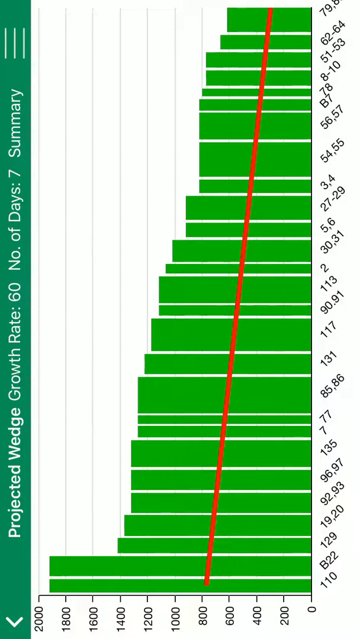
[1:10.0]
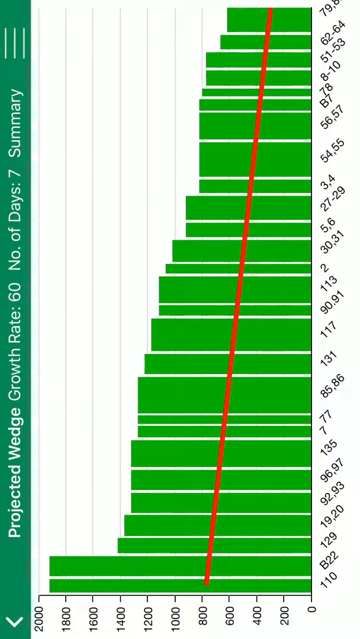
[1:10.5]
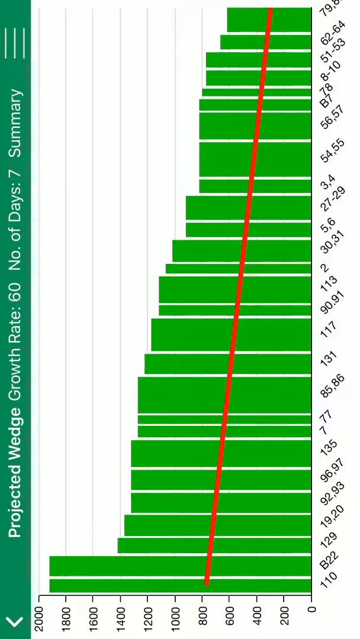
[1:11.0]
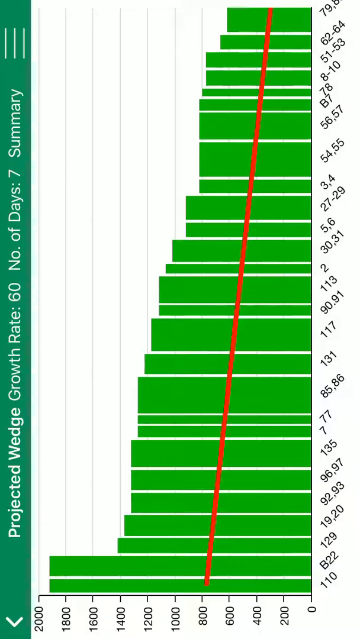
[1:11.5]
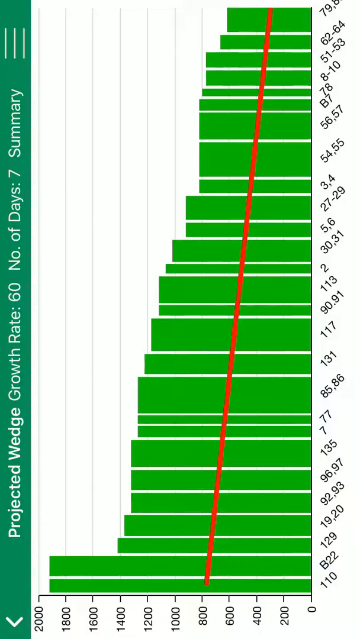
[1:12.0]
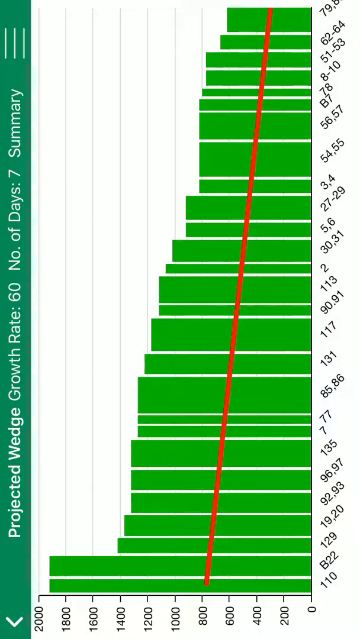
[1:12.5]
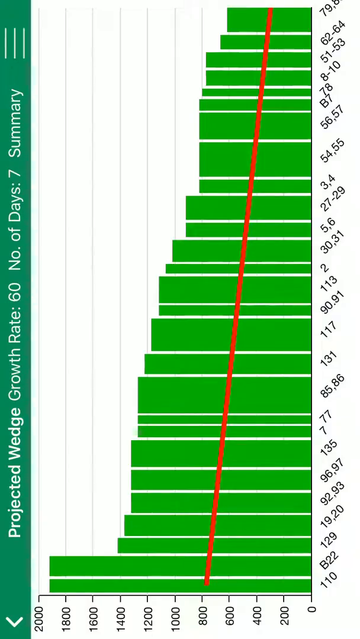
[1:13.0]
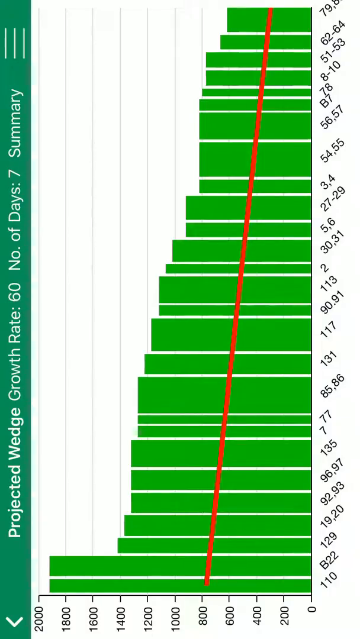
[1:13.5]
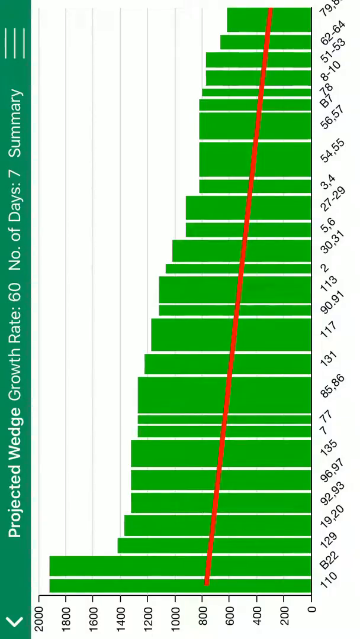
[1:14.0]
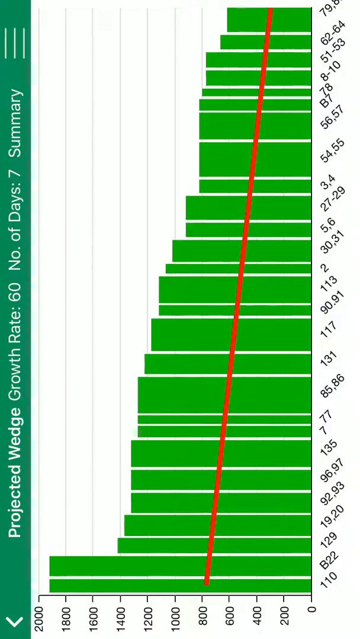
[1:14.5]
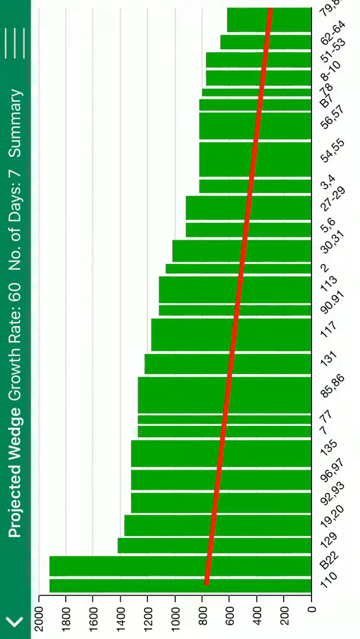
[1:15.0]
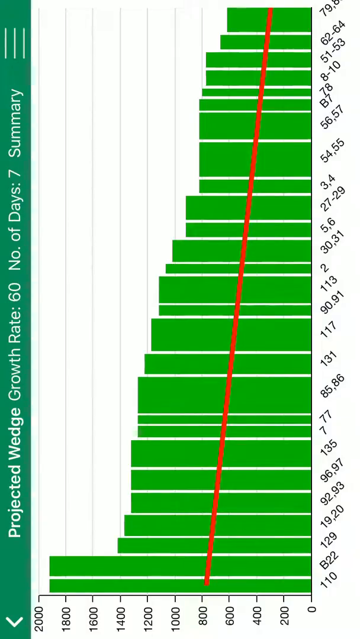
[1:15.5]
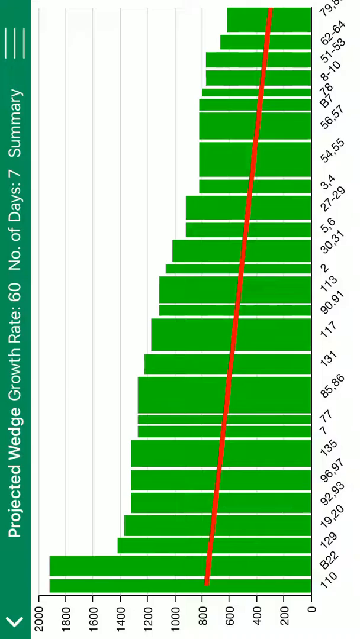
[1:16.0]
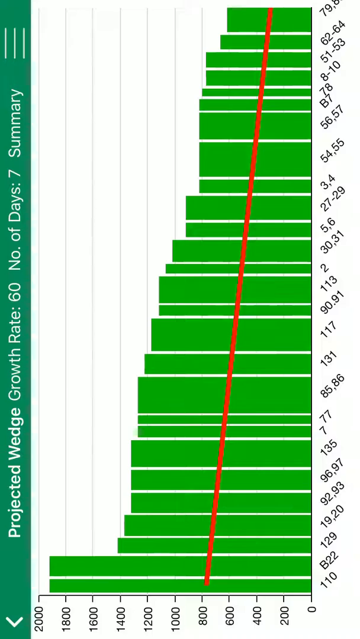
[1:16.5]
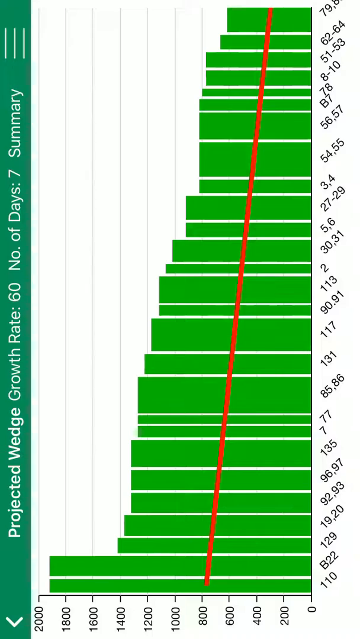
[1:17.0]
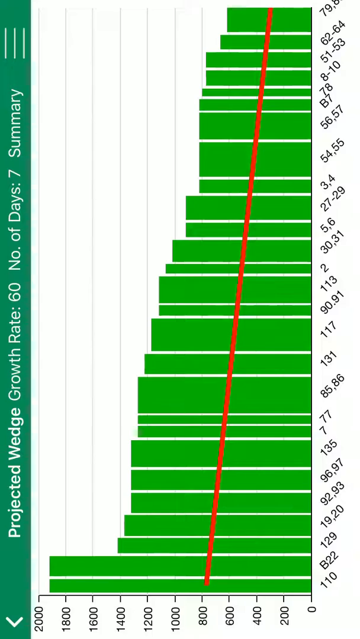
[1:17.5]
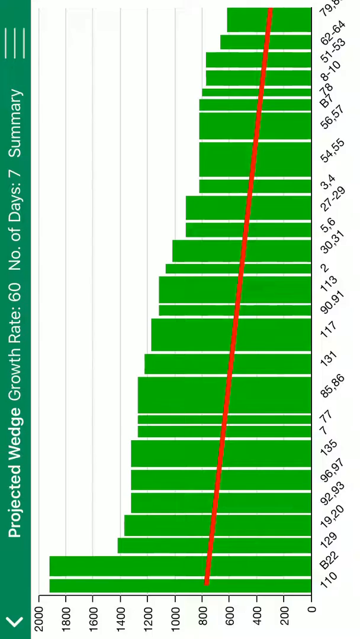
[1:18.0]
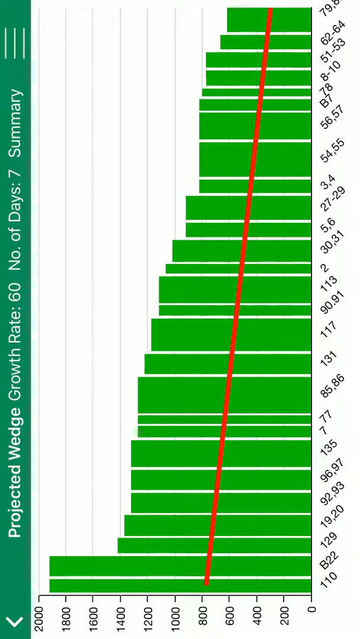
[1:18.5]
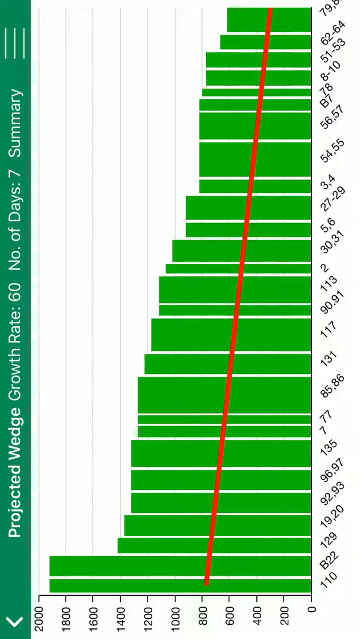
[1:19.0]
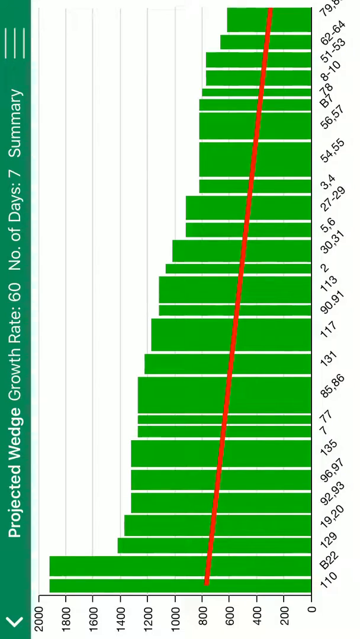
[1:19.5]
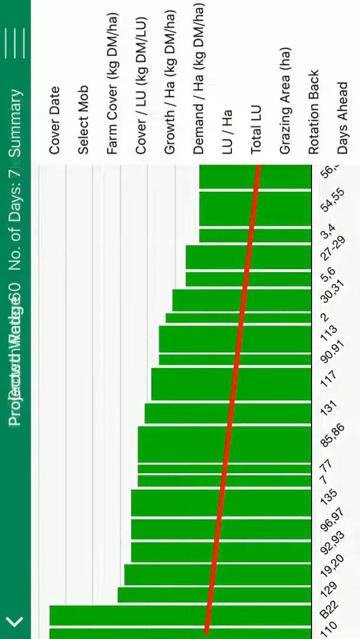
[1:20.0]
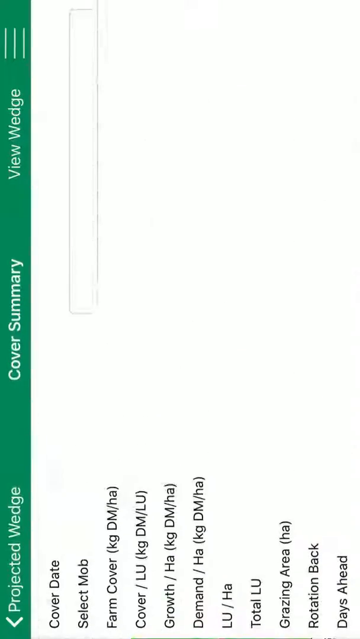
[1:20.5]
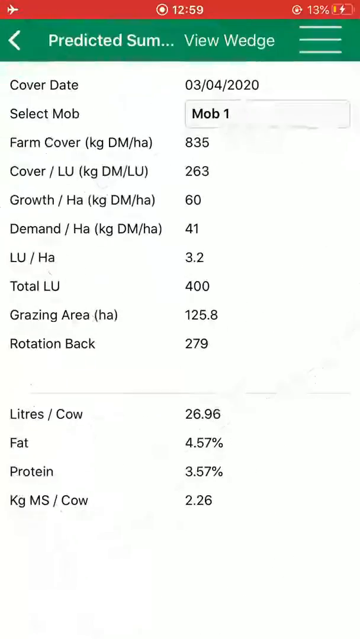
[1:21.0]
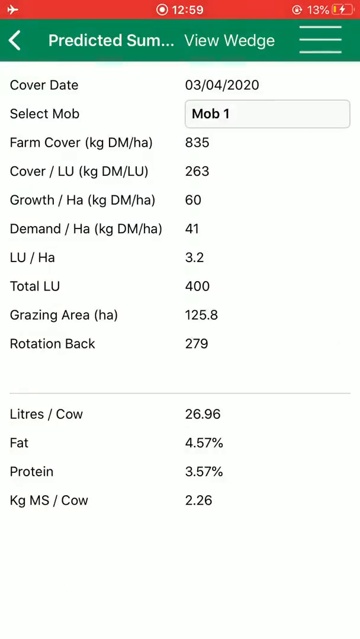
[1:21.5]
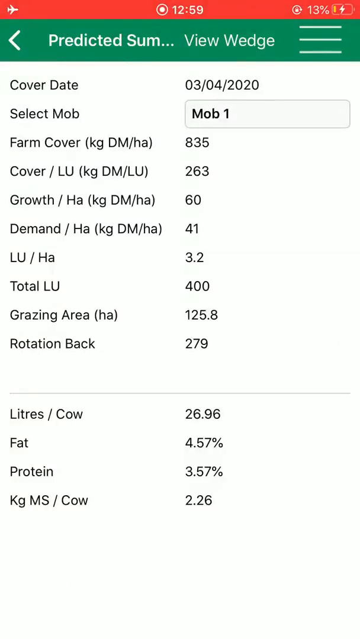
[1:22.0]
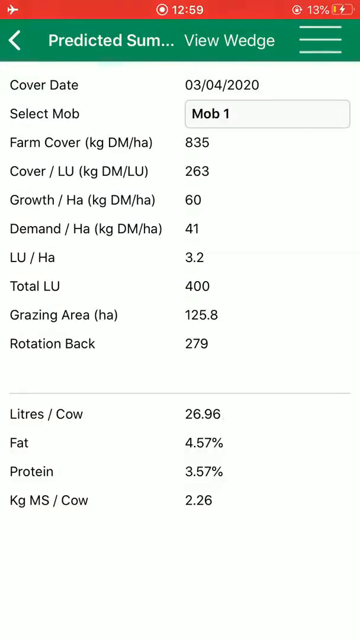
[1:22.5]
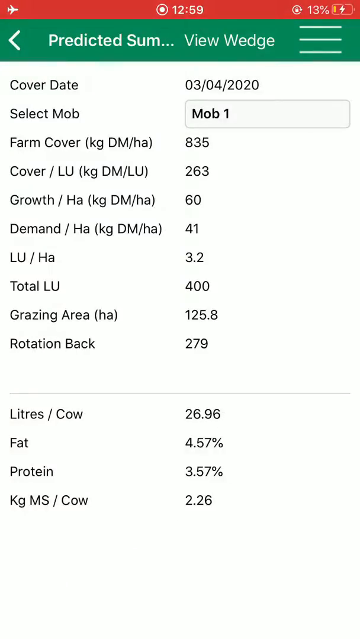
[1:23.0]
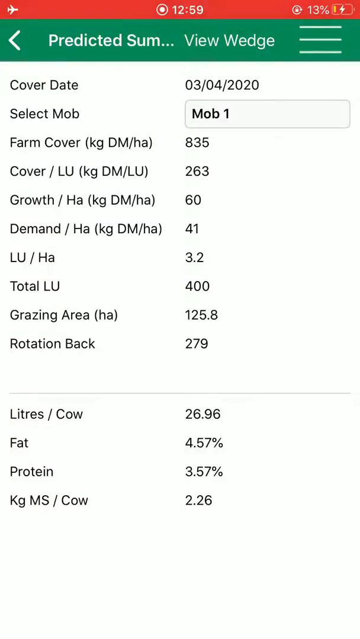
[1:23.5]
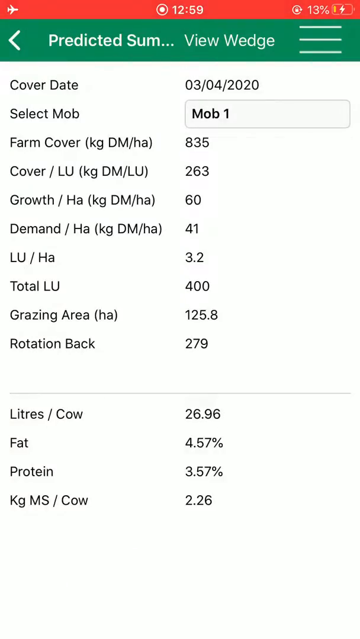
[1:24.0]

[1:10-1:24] The graph continues to show the green bars decreasing over time along with the red line of best fit. After some time the user changes to the next screen, which is in portrait mode; the screen turns, and the top now says "predicted summary view wedge". This screen has a lot of data on it, with entries for cover date, select mob, farm cover, cover per LU, growth per hectare, demand per hectare, LU per hectare, total LU, grazing area in hectares, rotation back, litres per cow, fat, protein and kilograms, presenting various data in chart form.